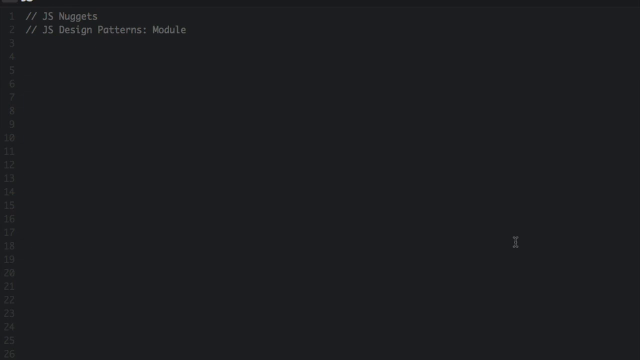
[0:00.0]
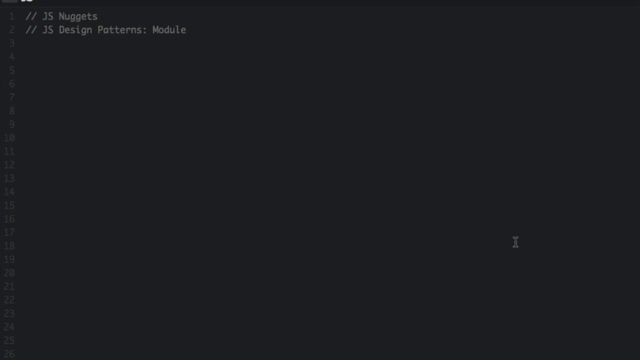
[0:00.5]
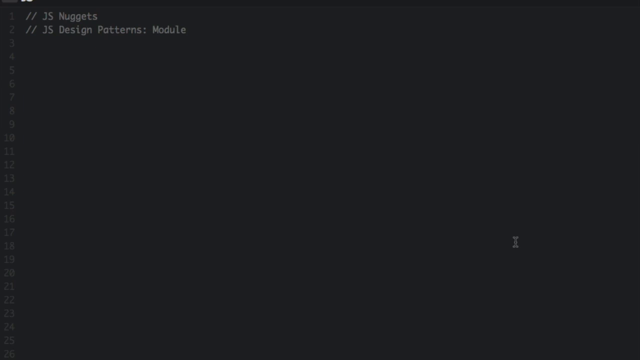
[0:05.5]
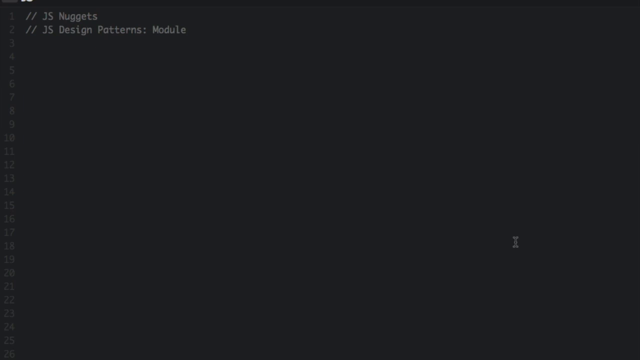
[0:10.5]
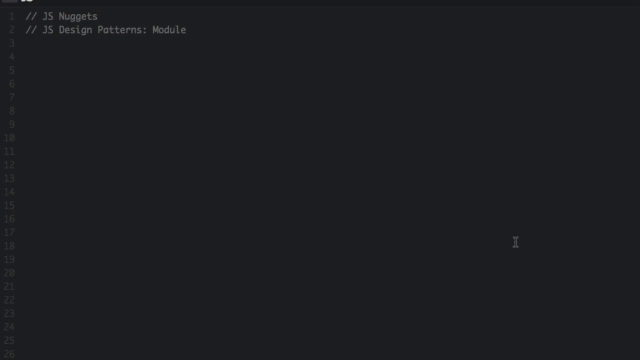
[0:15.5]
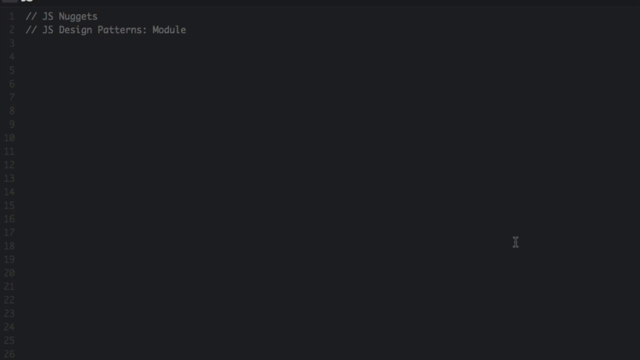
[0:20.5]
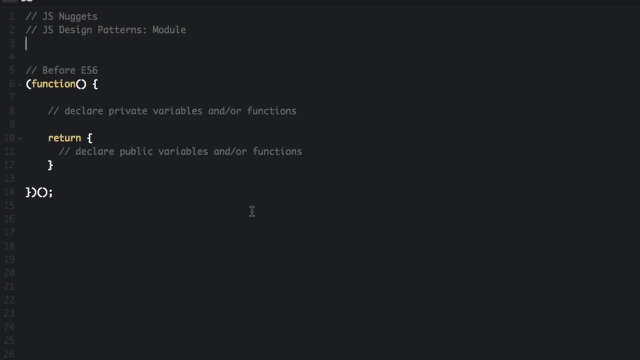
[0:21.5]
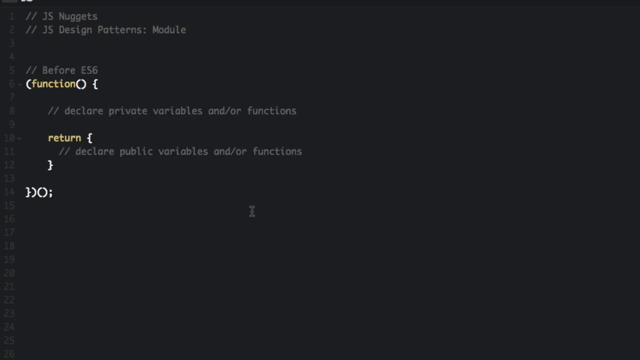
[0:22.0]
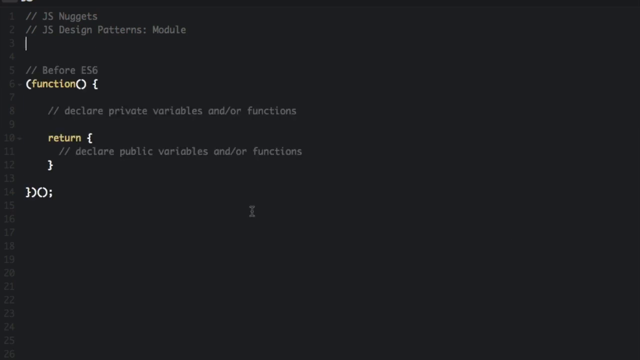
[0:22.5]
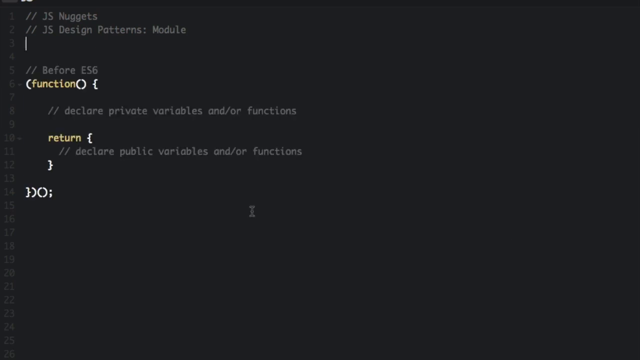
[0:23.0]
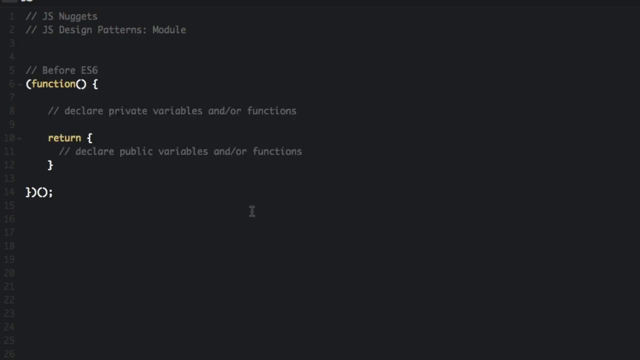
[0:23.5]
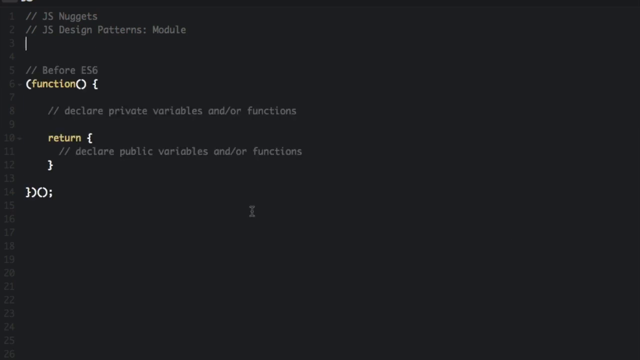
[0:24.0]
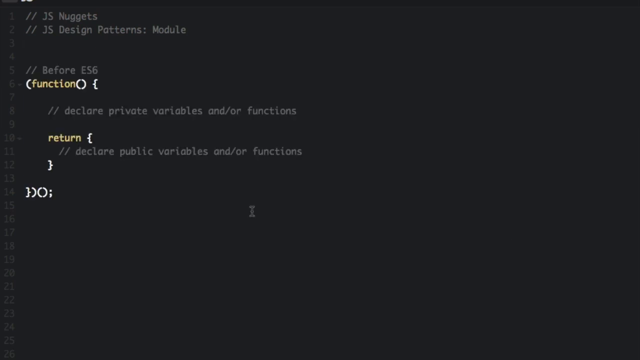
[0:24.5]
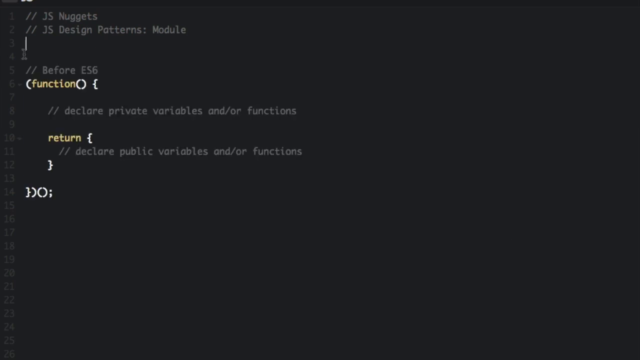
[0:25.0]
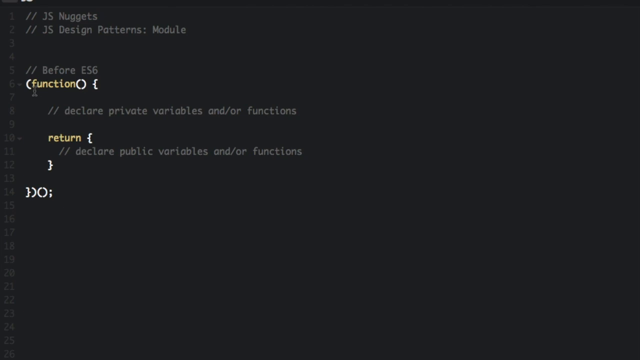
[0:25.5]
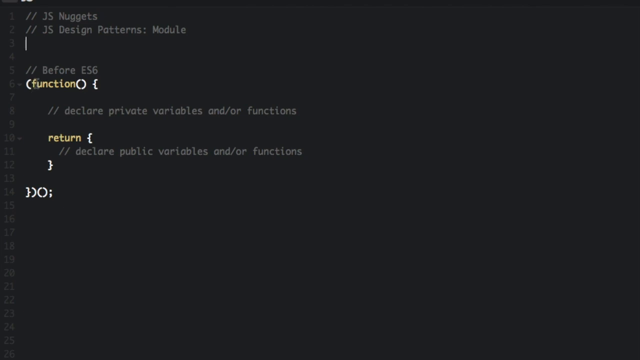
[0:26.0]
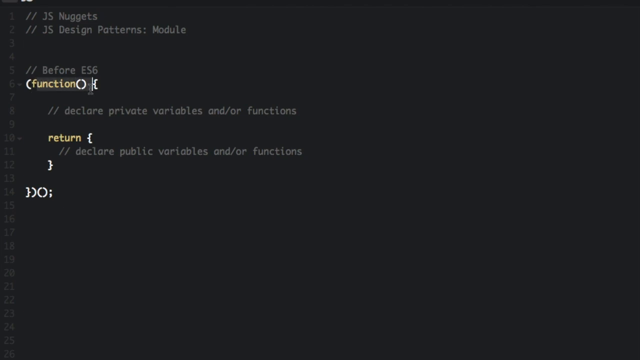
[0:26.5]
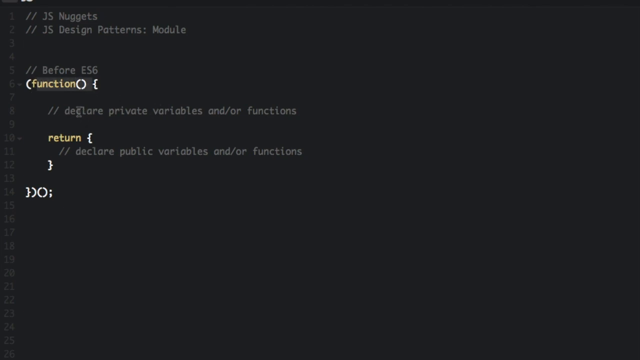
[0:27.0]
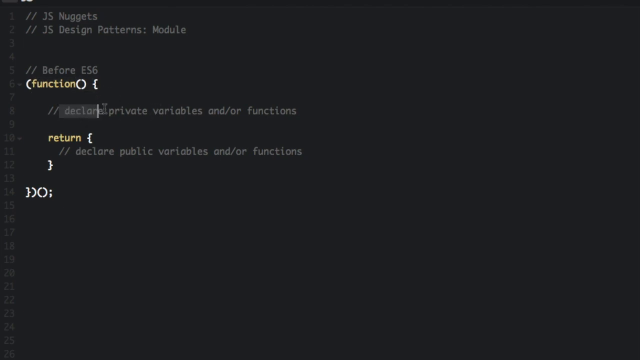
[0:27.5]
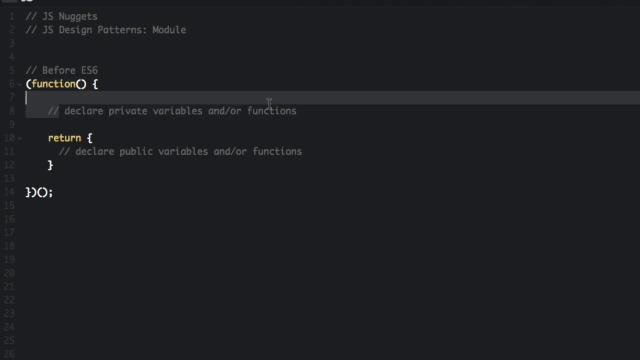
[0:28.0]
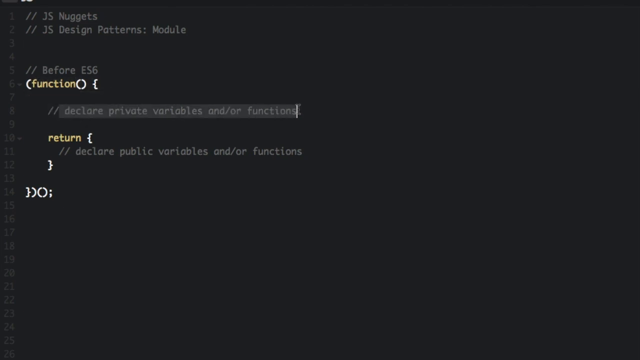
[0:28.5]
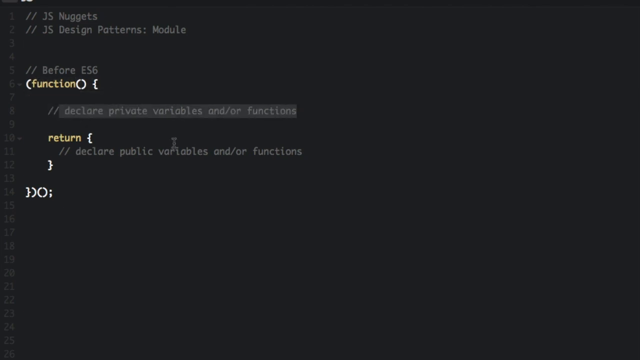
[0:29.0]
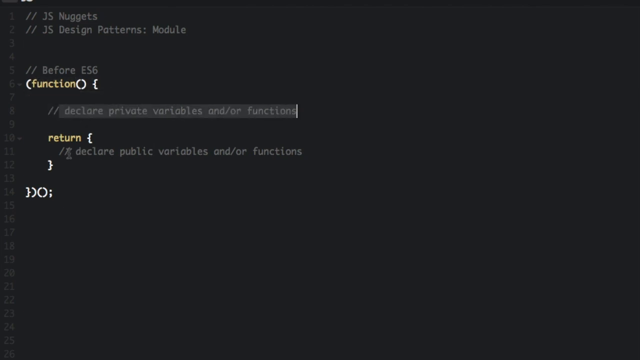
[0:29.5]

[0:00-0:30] What seems to be a black screen shows a screen recording of someone's computer, apparently a desktop or laptop. Most of the screen, or its background, is black. Down the far left side are faded line numbers running downward: 1, 2, 3, 4, 5, 6, 7, 8, 9, 10, 11, 12, 13, 14, 15 and so on, starting with 1 at the top. To the right of line 1, text in white reads "// JS Nuggets", with a capital J, S and N. The line beneath it, line 2, reads "// JS Design Patterns: Module", with capital J, S, D, P and M.